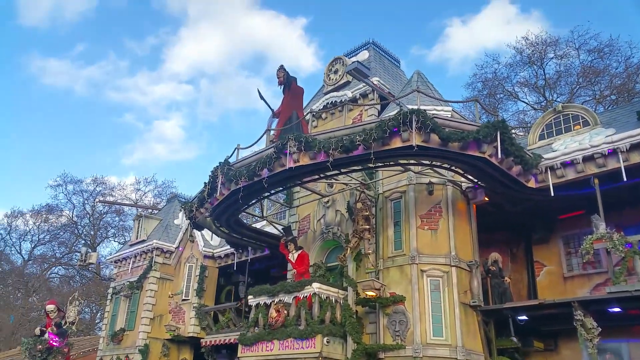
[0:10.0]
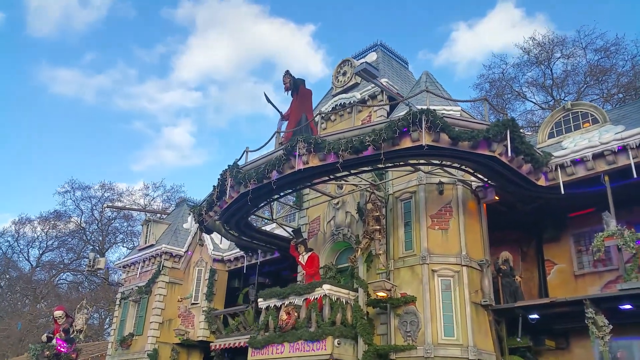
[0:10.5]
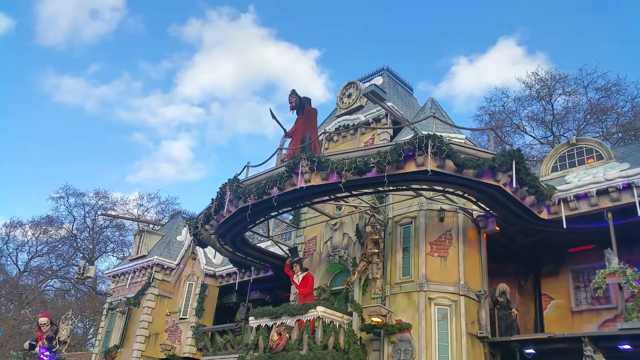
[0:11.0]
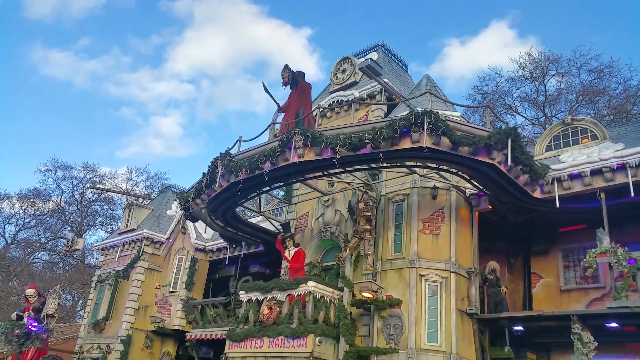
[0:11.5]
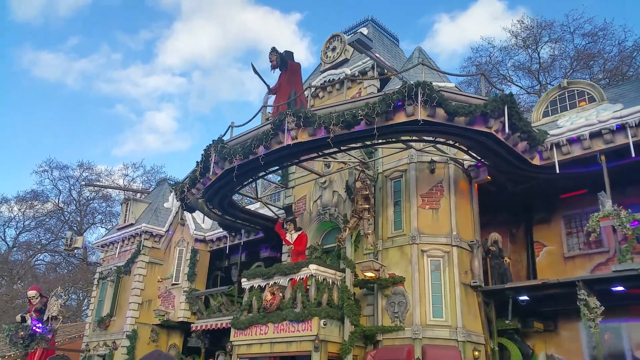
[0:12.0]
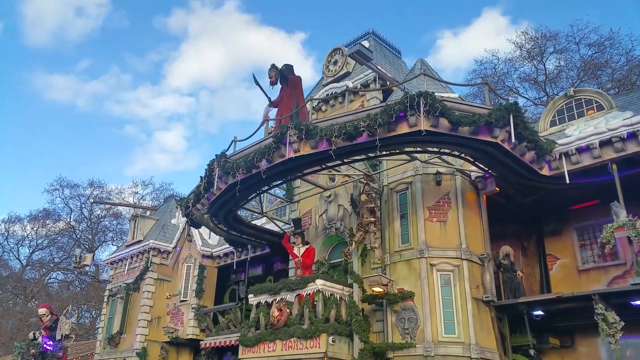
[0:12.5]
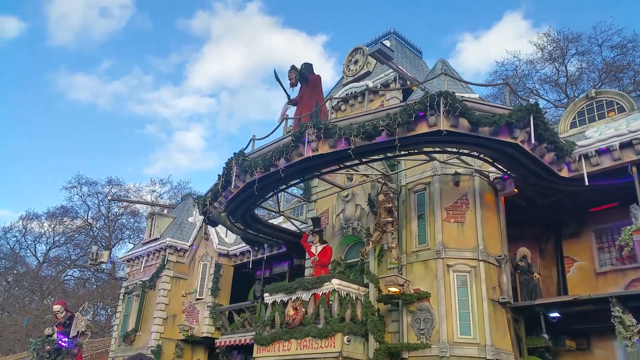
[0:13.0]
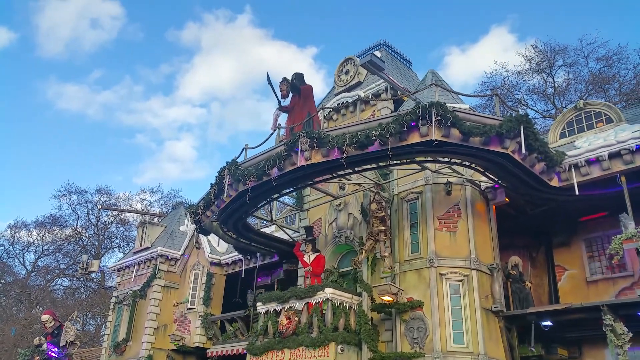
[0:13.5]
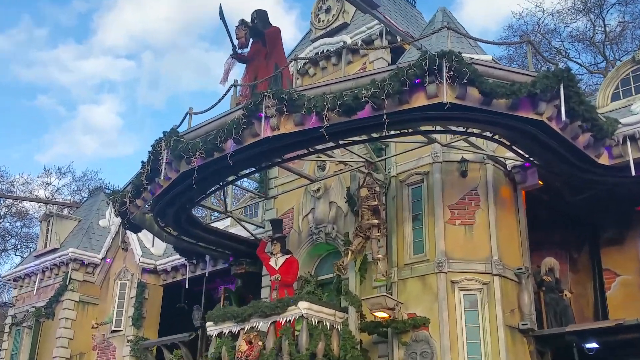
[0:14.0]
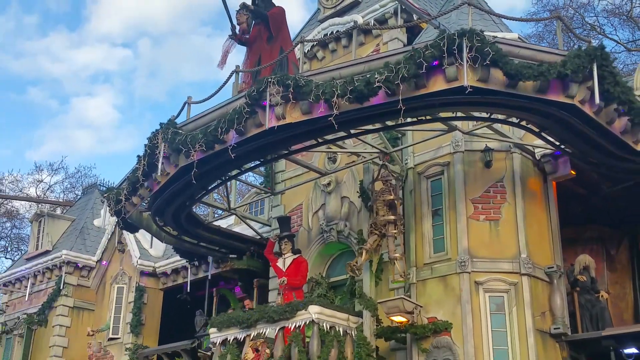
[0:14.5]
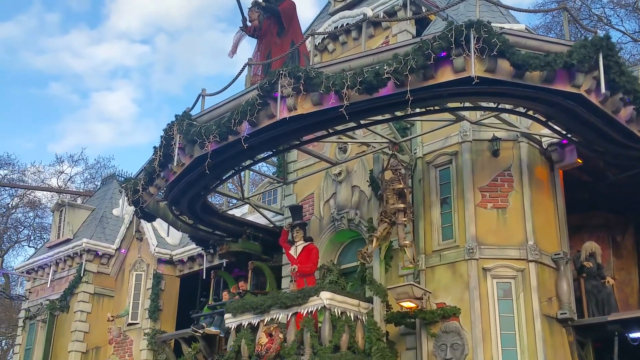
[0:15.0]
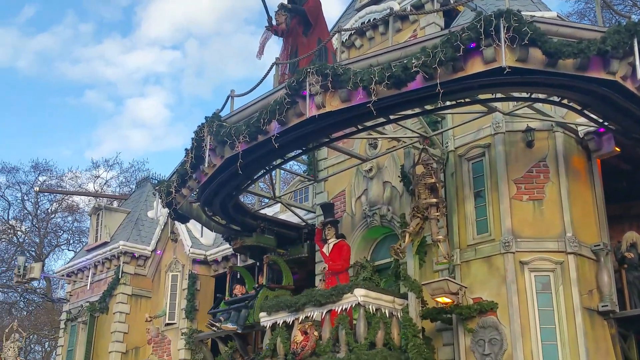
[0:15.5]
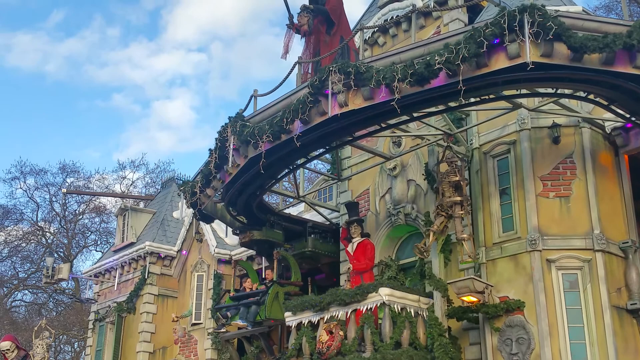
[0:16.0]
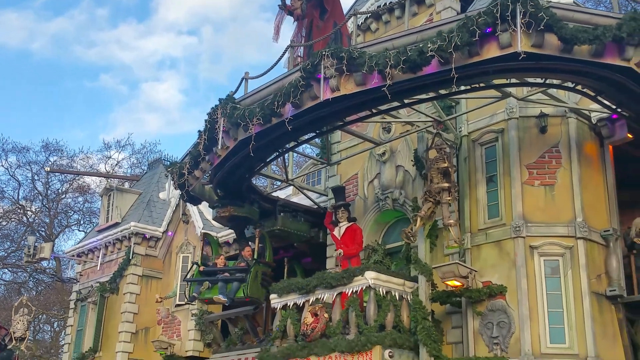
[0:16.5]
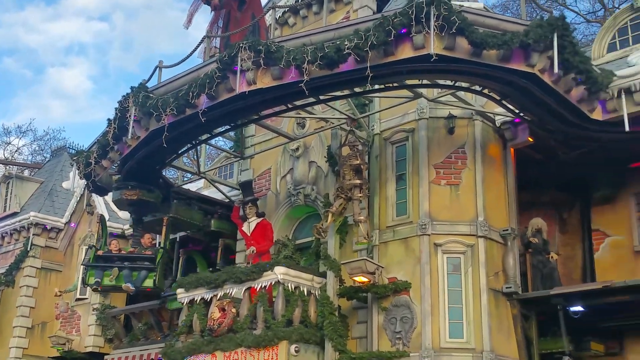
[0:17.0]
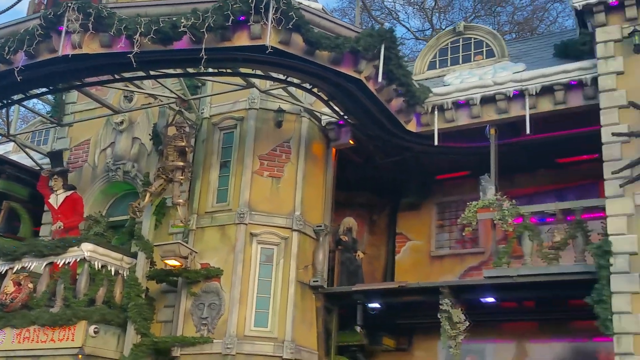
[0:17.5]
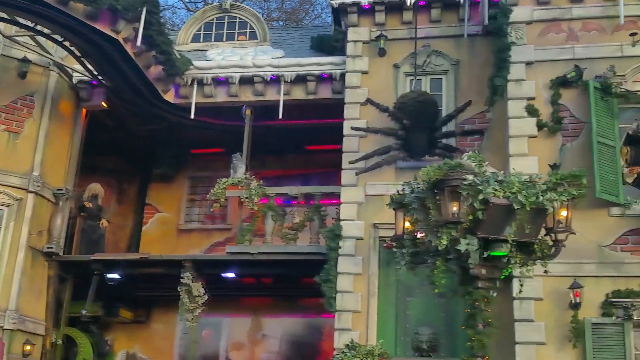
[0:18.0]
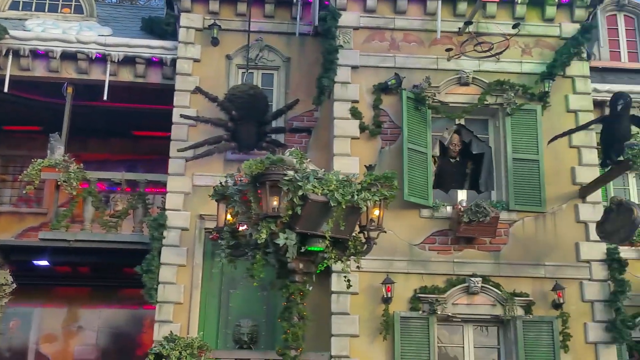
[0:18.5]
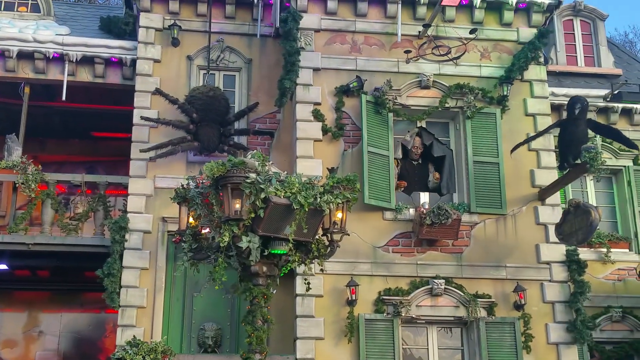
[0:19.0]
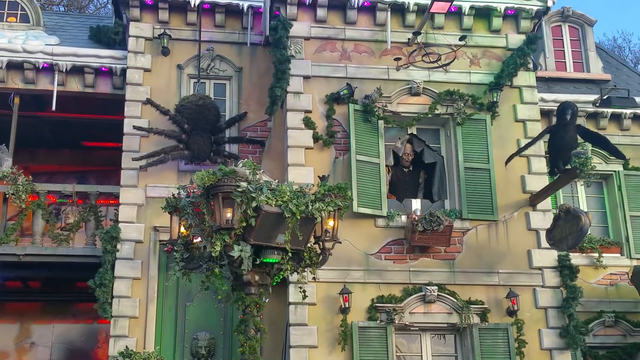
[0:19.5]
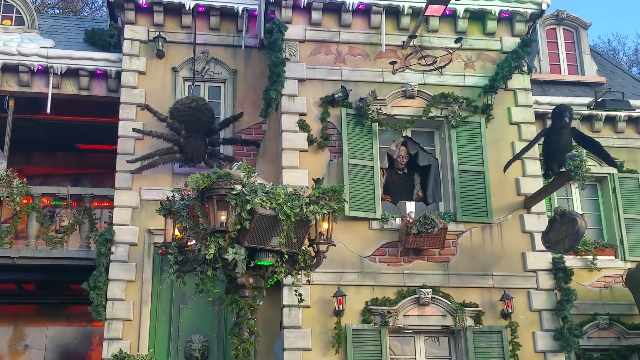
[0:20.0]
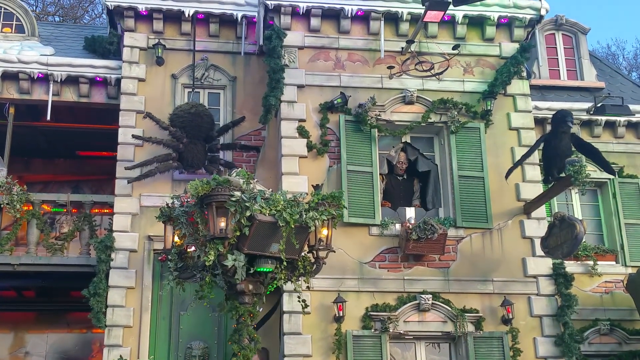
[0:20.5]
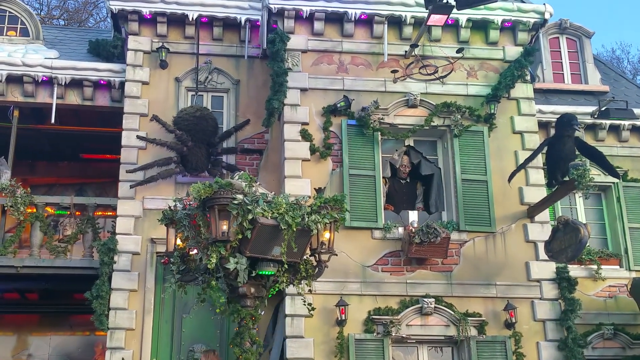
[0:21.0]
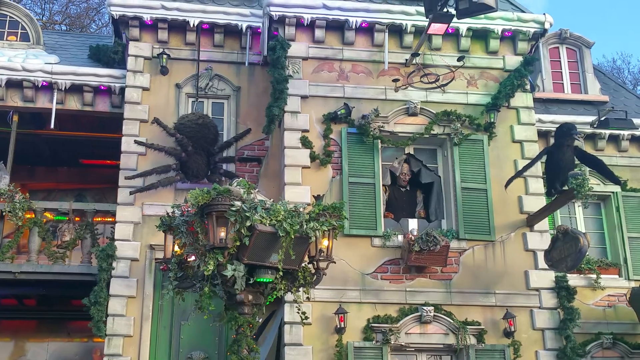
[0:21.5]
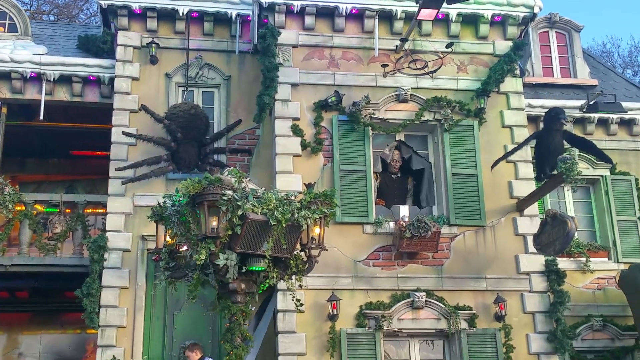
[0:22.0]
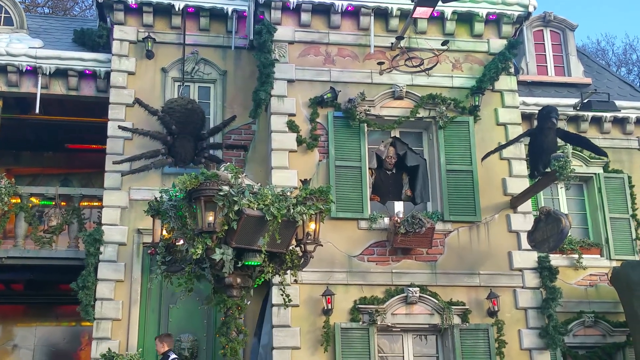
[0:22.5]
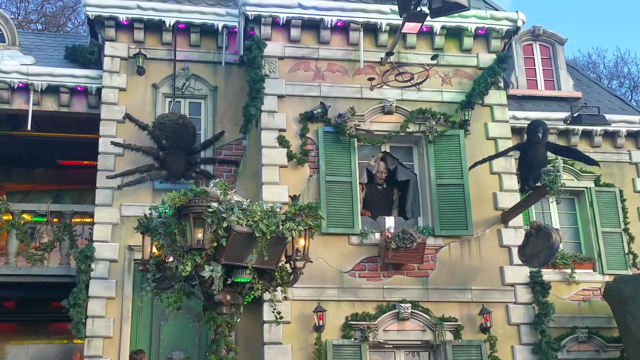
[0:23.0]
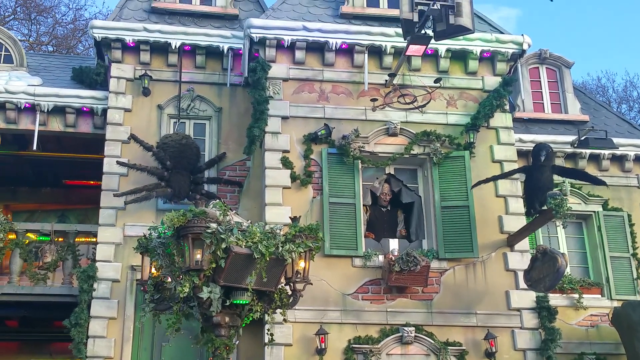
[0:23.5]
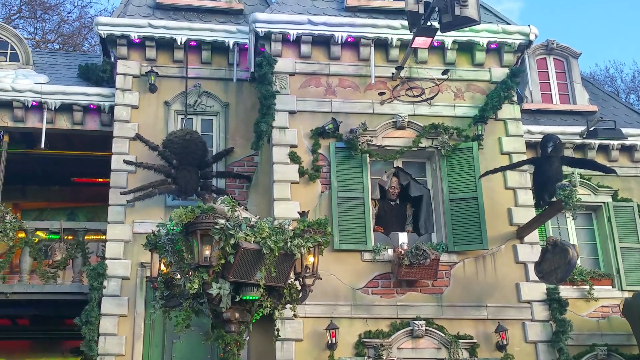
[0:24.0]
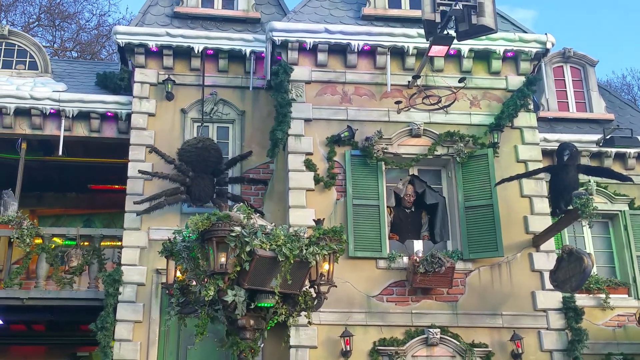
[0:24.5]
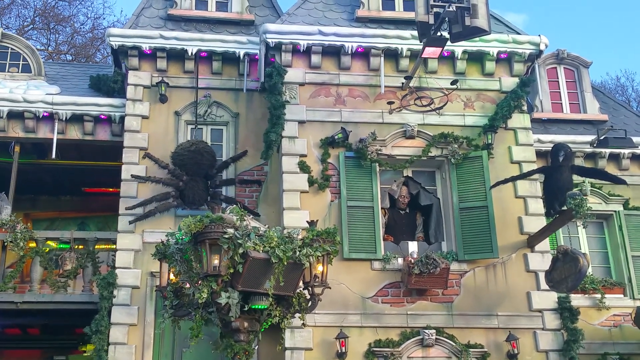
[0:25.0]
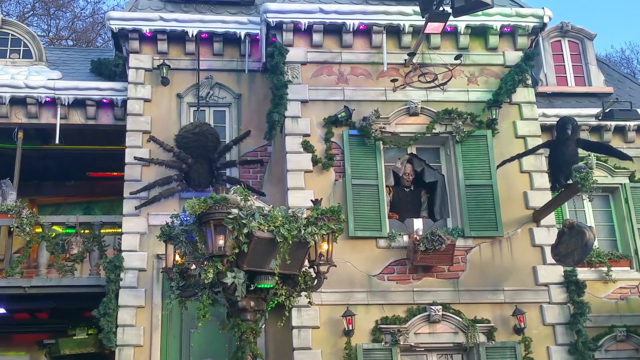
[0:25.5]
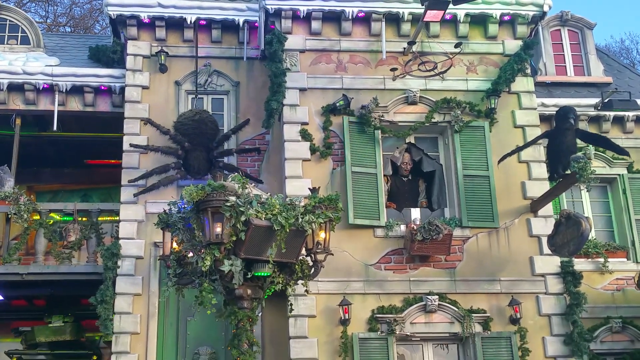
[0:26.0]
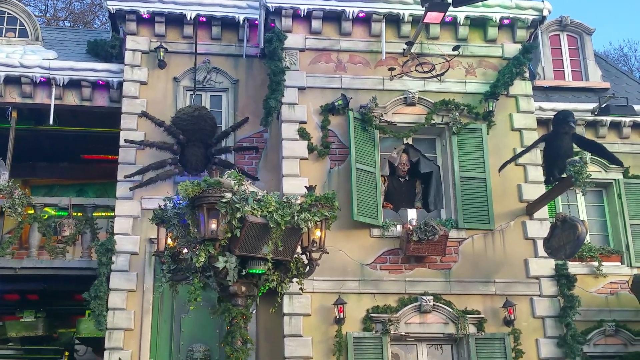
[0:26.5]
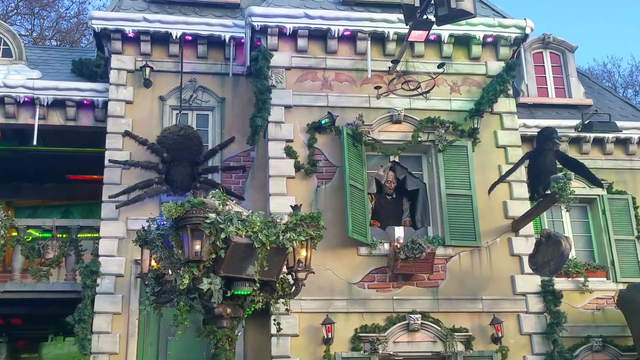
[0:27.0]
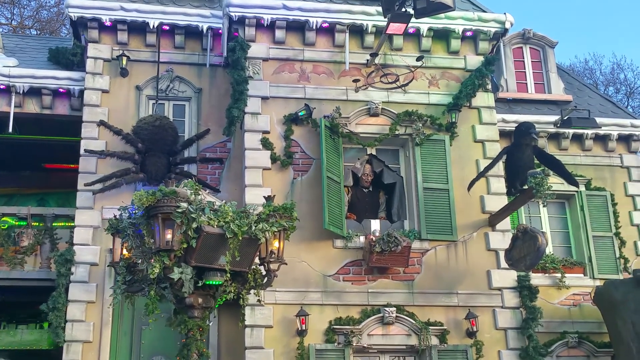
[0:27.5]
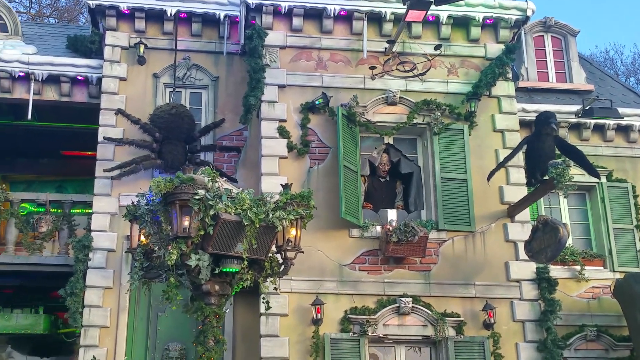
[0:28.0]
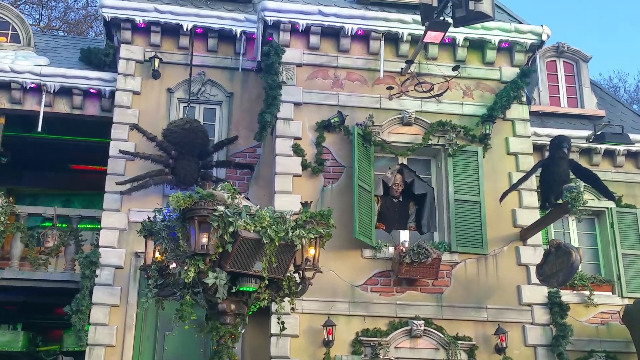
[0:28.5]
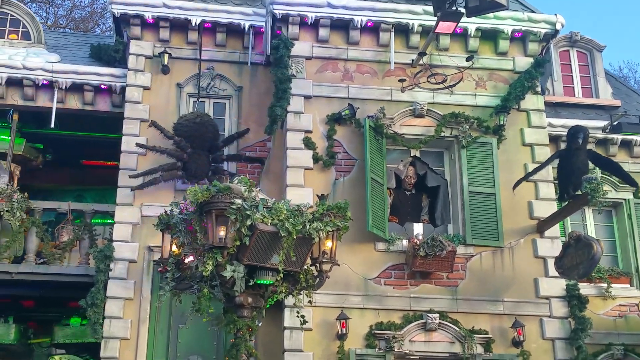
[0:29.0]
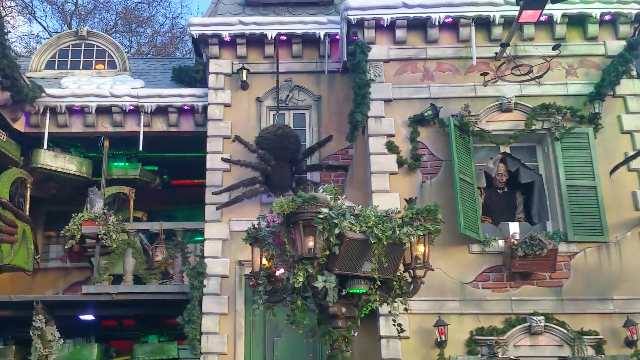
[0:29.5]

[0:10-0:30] A man on top of a balcony, dressed in a long red cloak, wields a sword; he appears to take off his mask and slowly bring it to his chest. On the left side of the frame, a couple in a green trolley goes across the front of the center of the house. A man appears in a window whose shutters open from the wall and sort of slam against the house, and he moves about in the window. A large spider starts to move and appears to crawl on the house down a window from the chimney. The green trolley makes its way to the right side of a large pillar at the front of the house and disappears. The house is intricately decorated and appears to have a Halloween theme, with purple lights and some blue lights. It is daytime, with a blue sky and minimal cloud coverage, and the trees on the left side are bare.